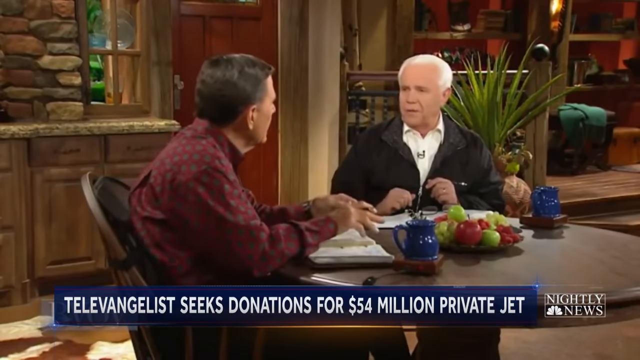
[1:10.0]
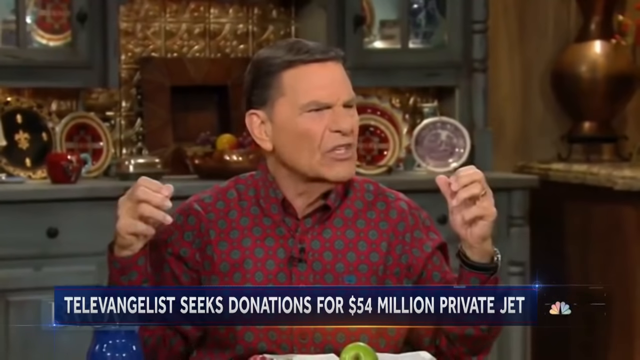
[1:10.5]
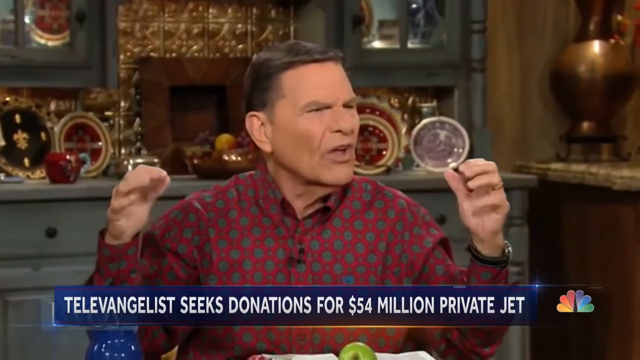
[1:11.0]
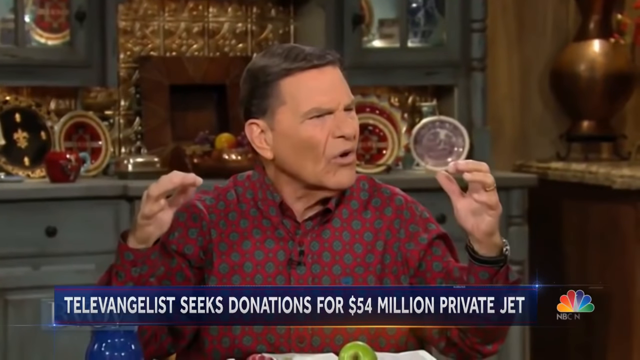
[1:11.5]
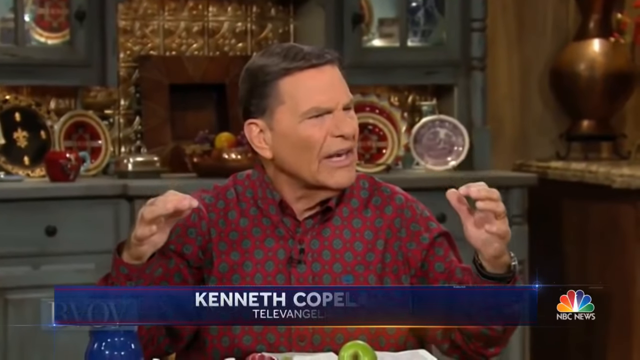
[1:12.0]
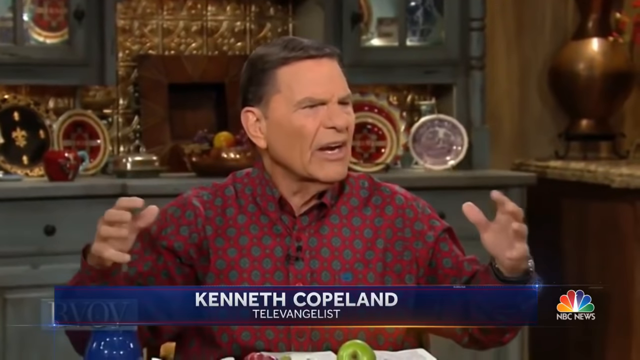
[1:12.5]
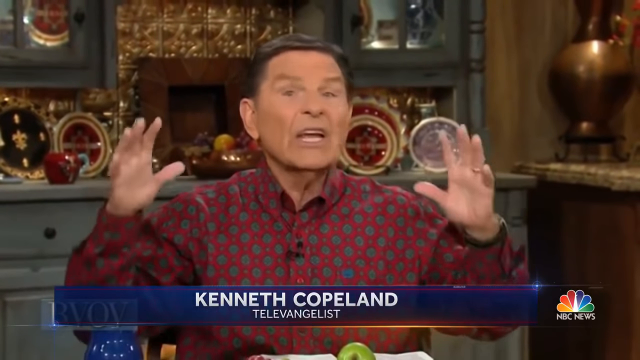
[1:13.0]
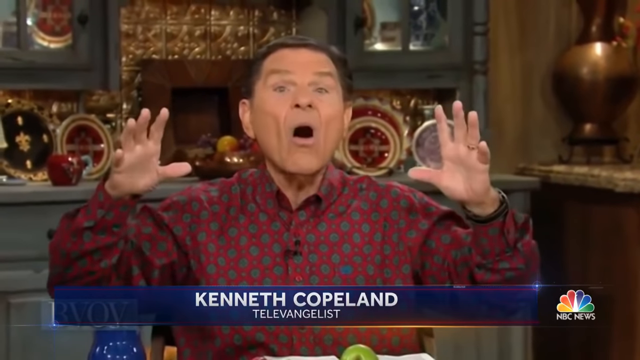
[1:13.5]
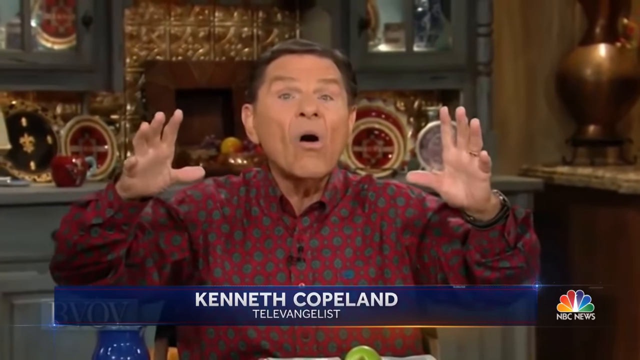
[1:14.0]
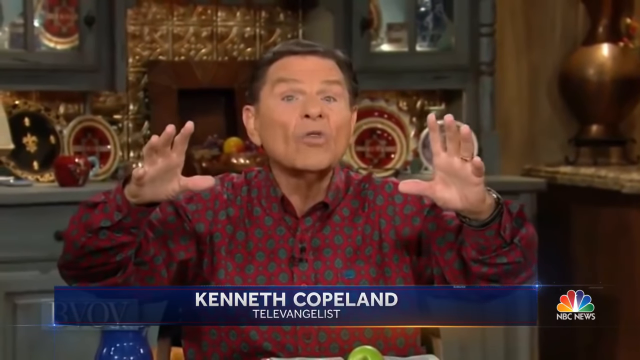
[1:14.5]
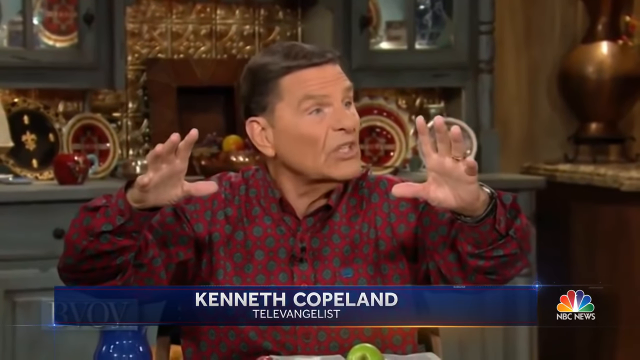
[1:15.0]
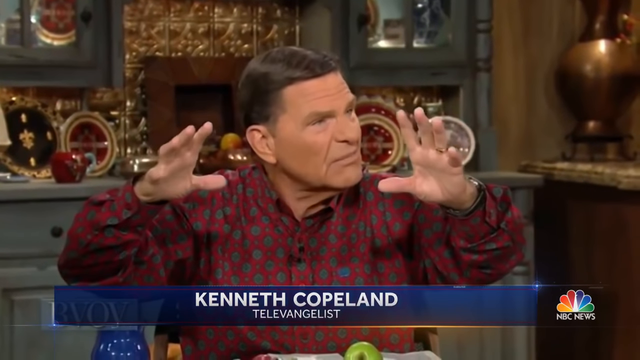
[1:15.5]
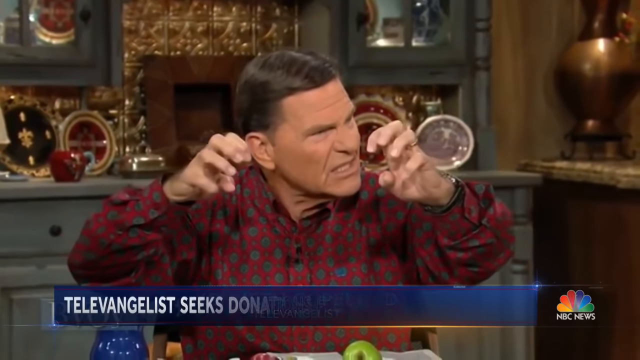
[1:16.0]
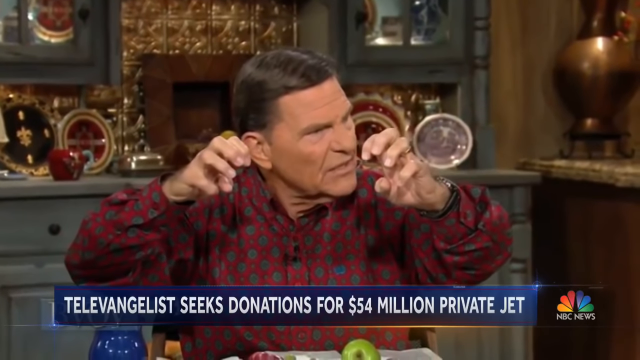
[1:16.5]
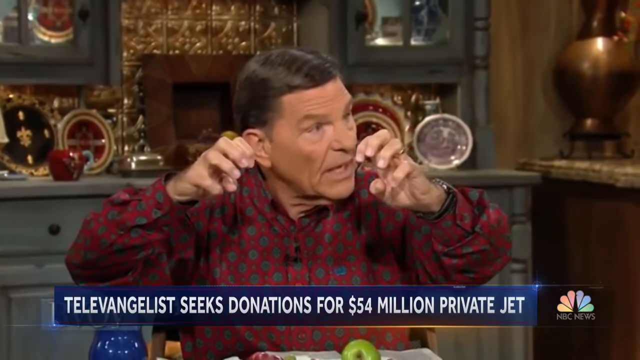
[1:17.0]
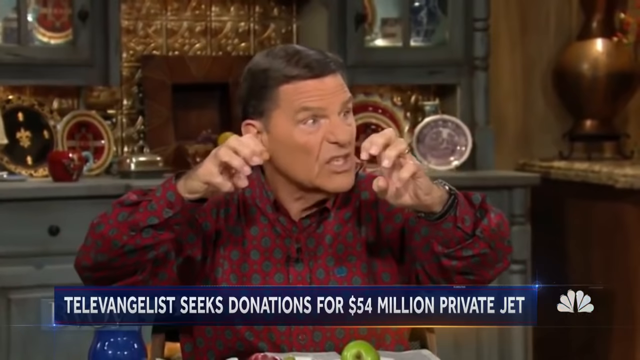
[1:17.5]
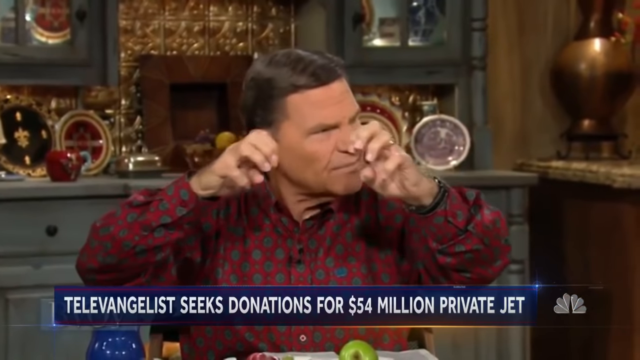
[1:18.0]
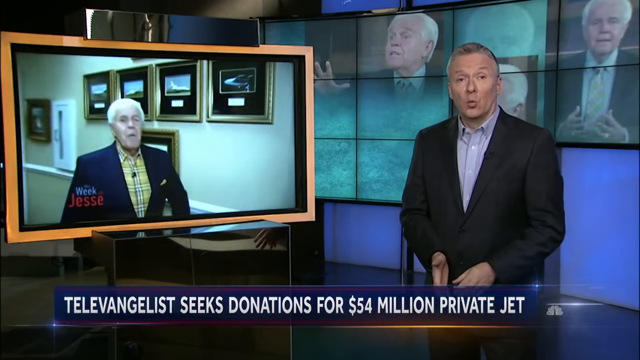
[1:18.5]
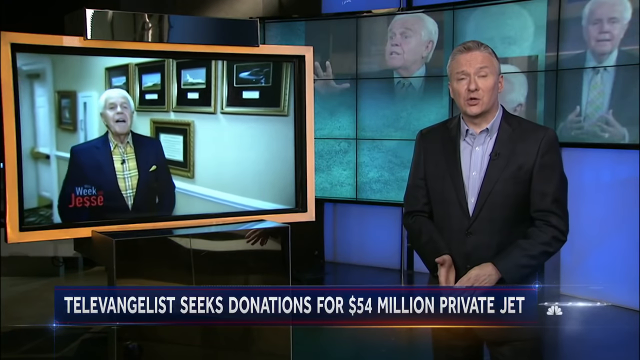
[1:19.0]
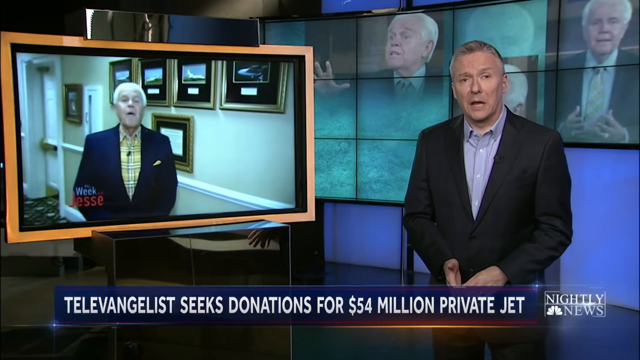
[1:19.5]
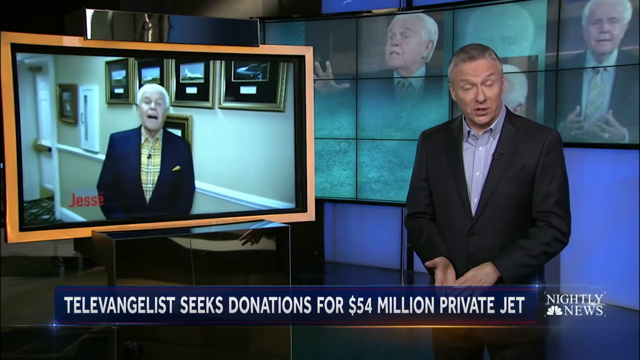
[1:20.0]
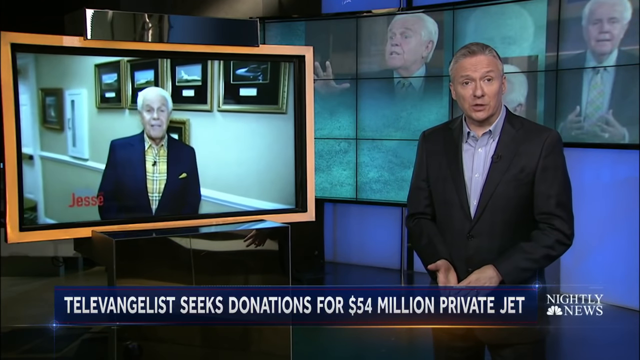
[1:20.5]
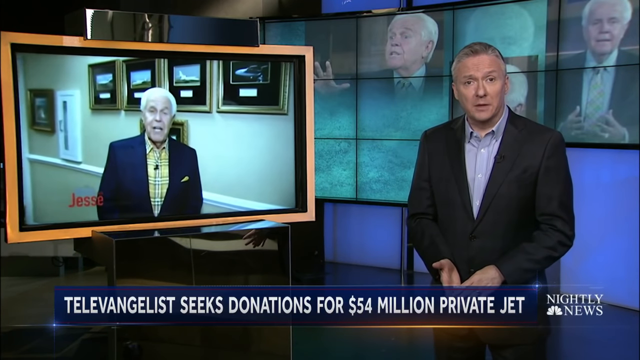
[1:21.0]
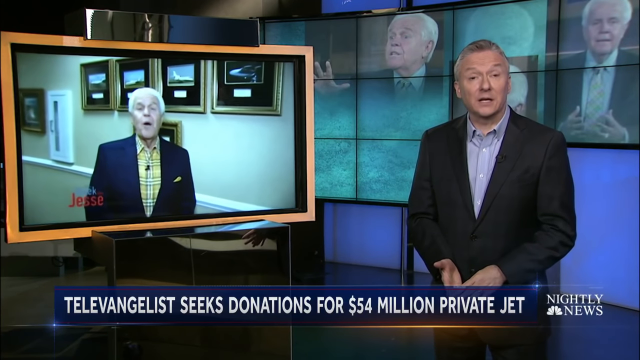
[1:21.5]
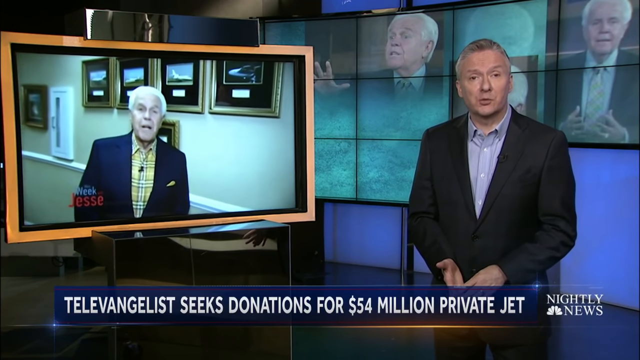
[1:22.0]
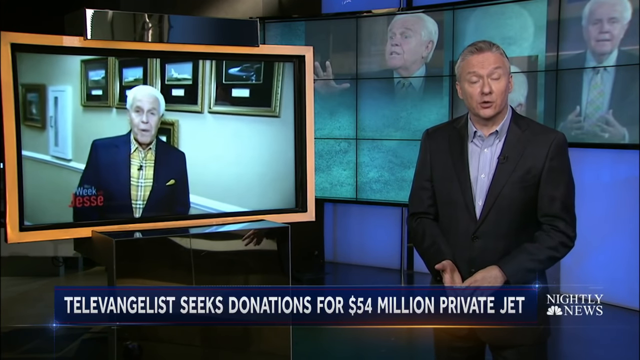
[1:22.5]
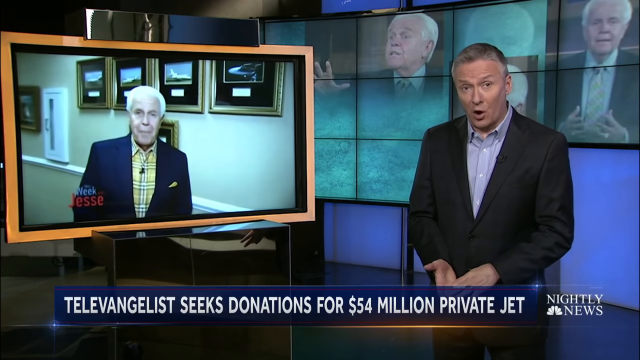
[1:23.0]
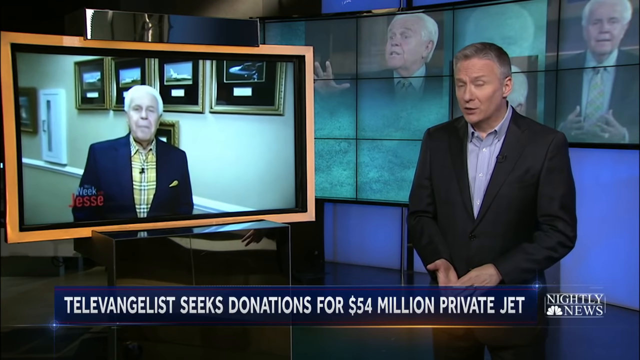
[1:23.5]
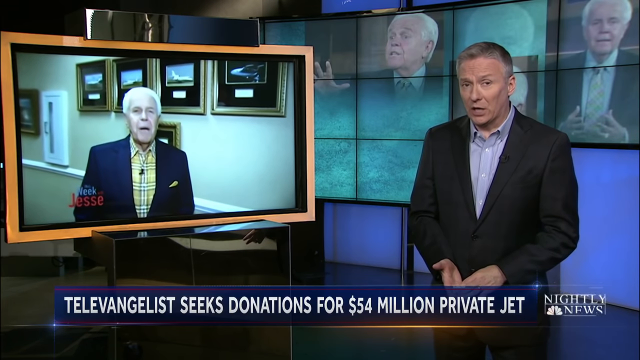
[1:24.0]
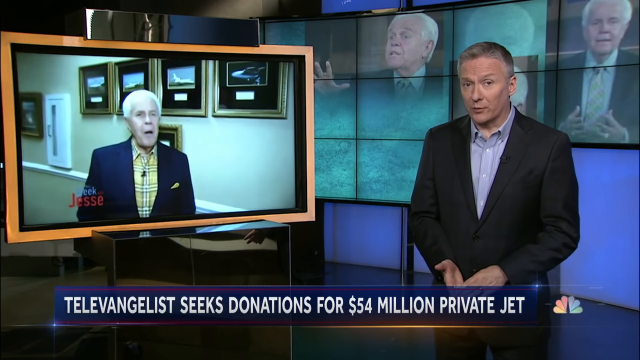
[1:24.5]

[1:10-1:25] Kenneth Copeland, a televangelist, sits at a table with the other televangelist, apparently named Jesse, in a very ornate area with lots of gold in the background, possibly one of their homes. Copeland wears a red shirt with blue diamonds on it; the other televangelist wears a yellow plaid shirt with a blue suit jacket. A reporter then discusses the topic, with a rolling screen of the televangelist and other pictures of him in the background.